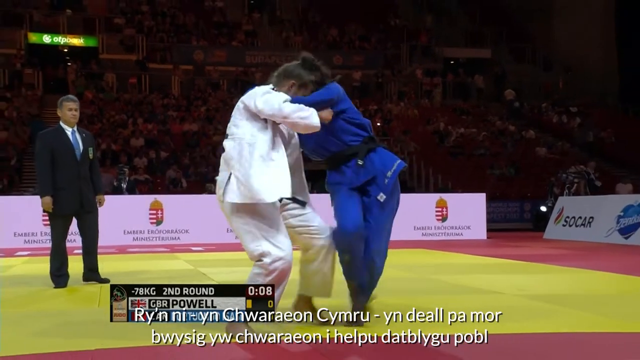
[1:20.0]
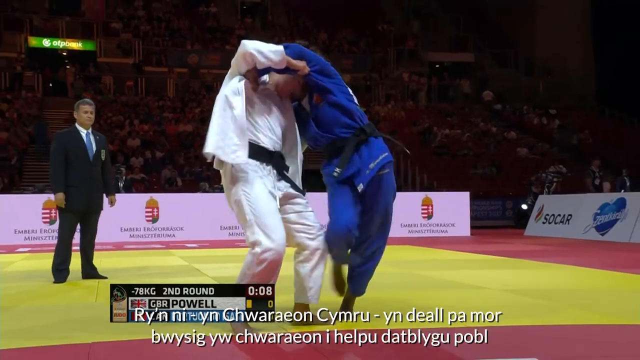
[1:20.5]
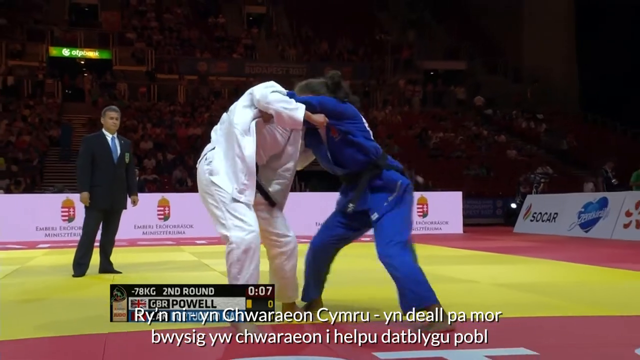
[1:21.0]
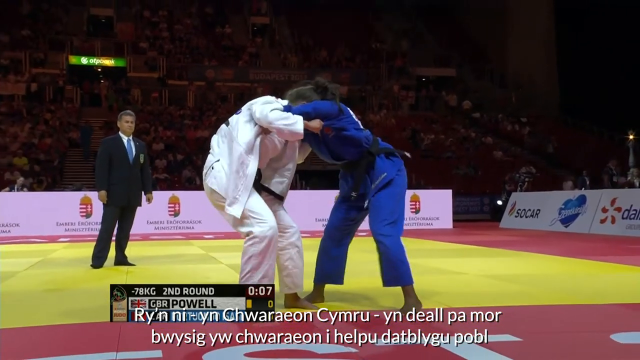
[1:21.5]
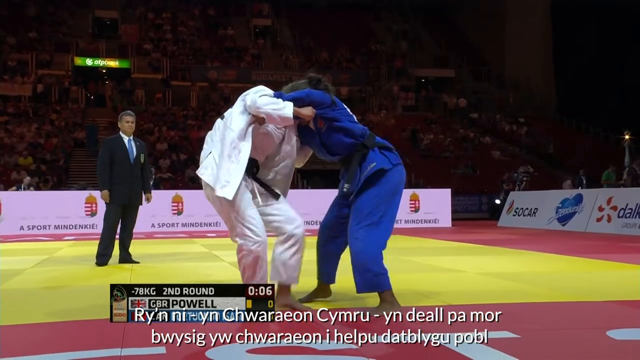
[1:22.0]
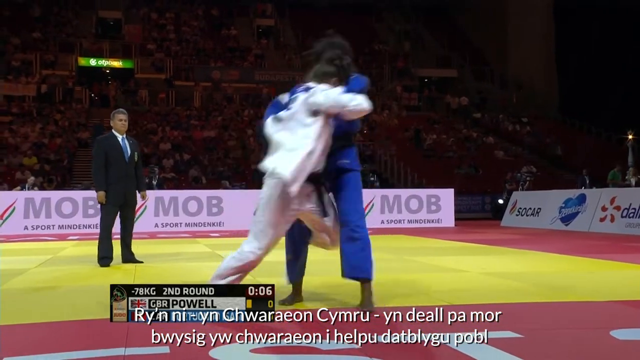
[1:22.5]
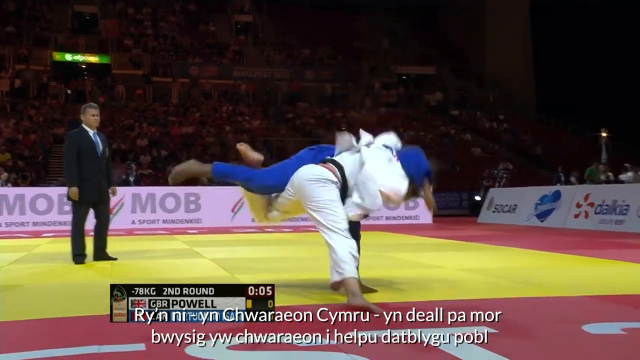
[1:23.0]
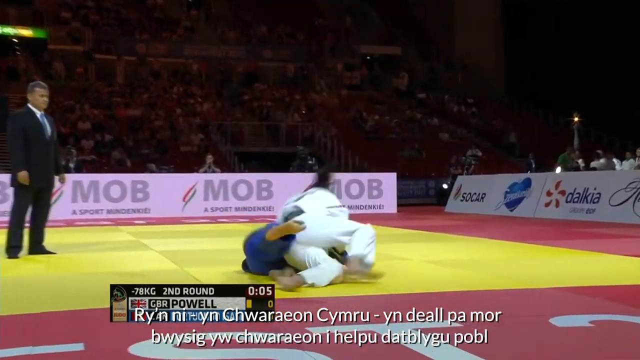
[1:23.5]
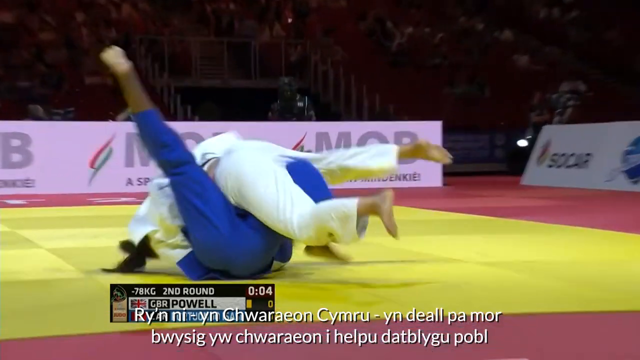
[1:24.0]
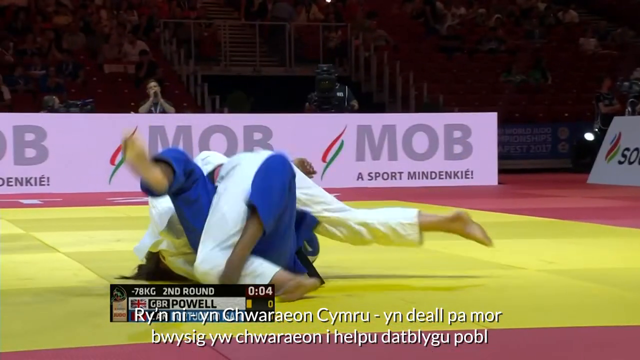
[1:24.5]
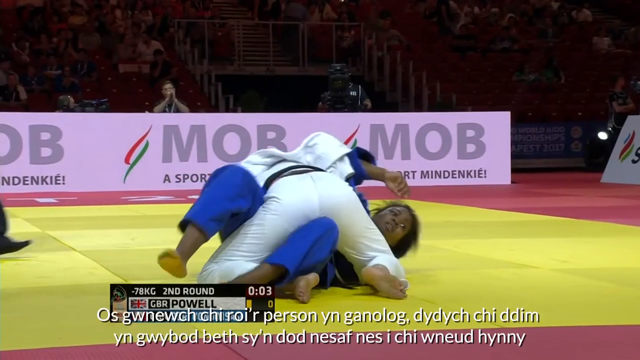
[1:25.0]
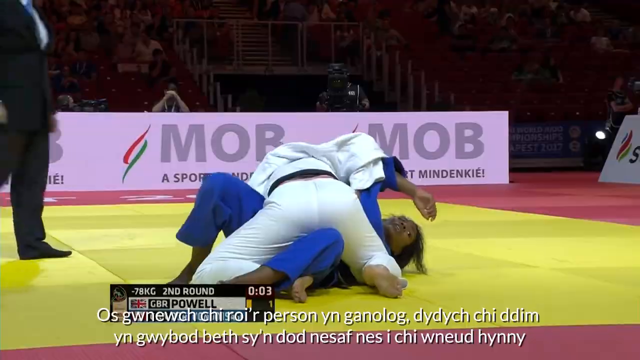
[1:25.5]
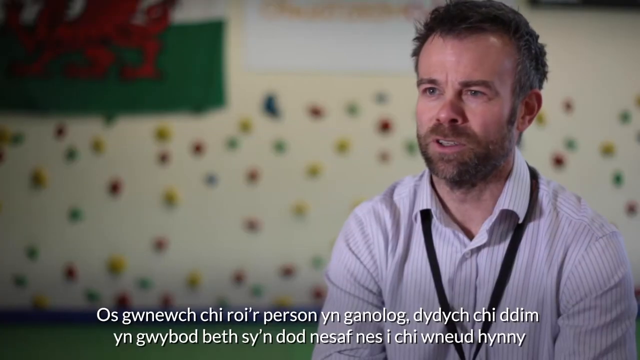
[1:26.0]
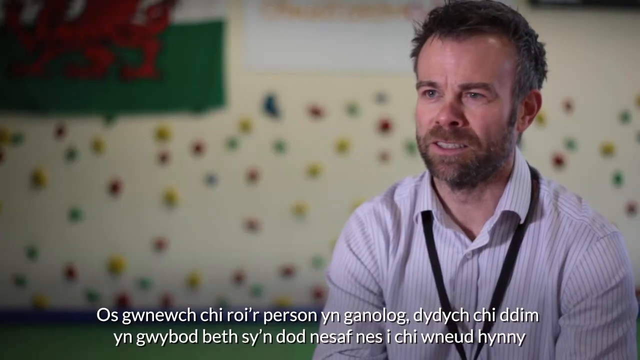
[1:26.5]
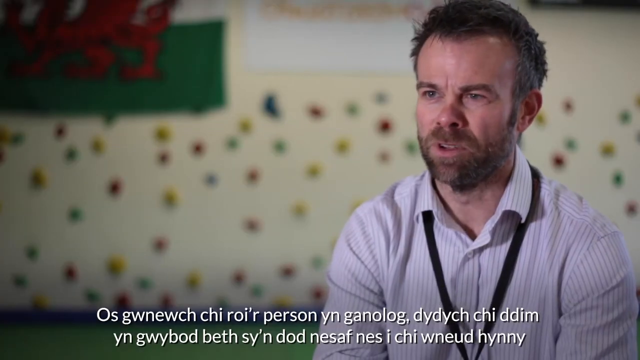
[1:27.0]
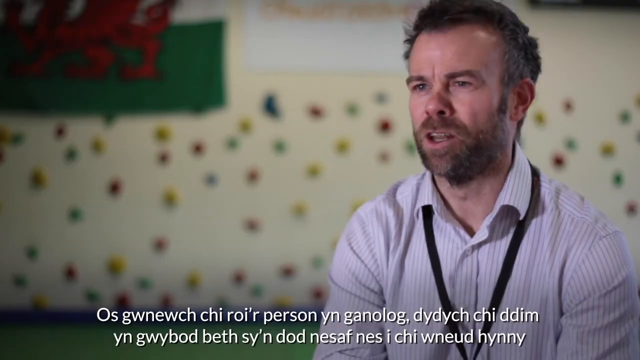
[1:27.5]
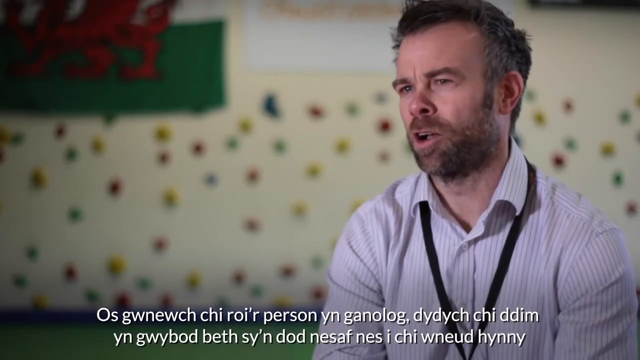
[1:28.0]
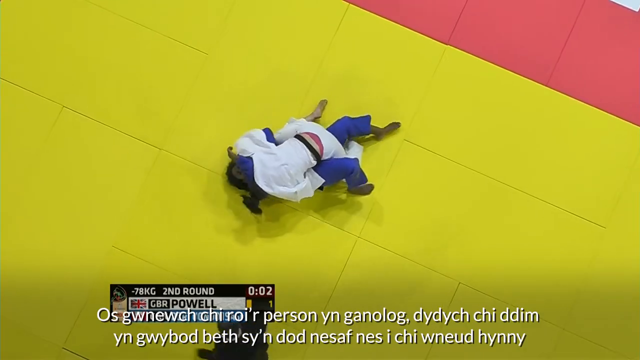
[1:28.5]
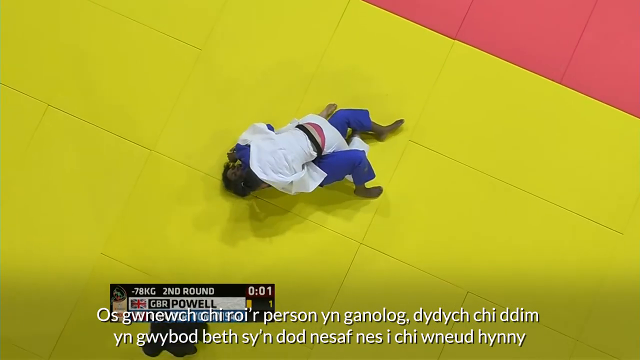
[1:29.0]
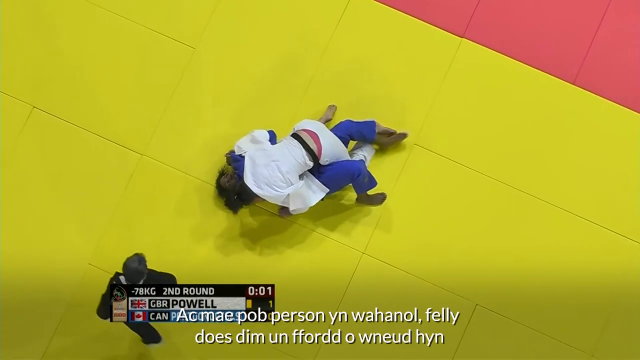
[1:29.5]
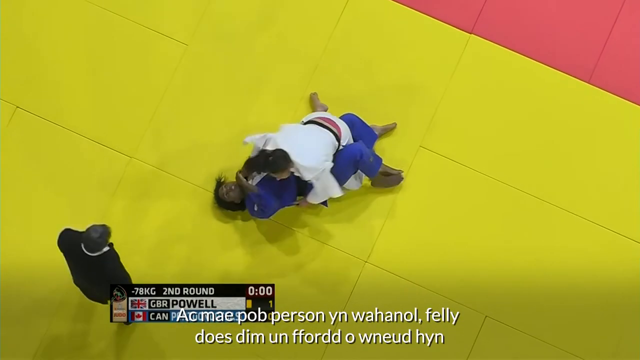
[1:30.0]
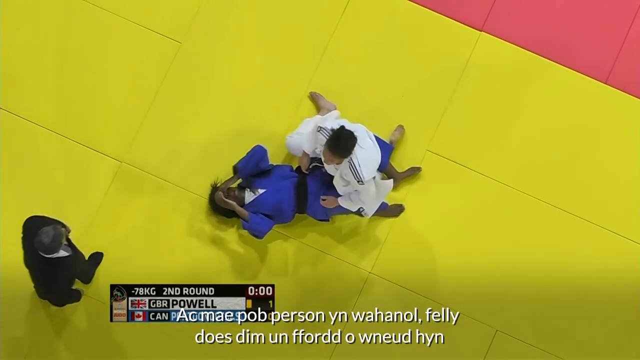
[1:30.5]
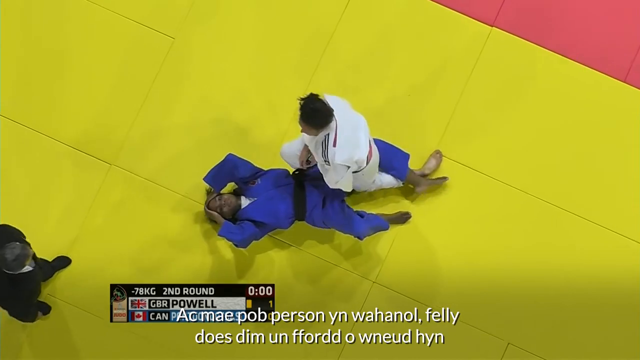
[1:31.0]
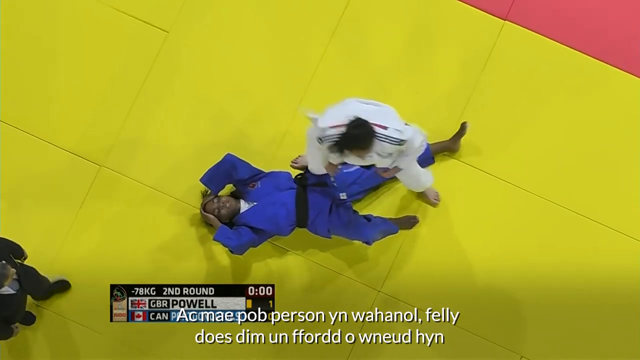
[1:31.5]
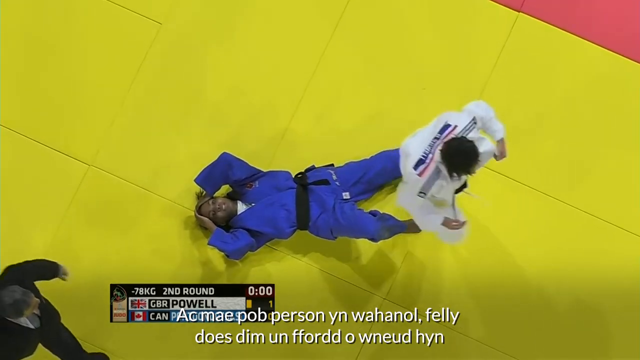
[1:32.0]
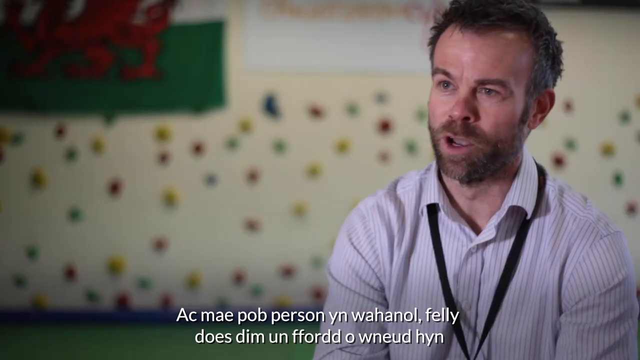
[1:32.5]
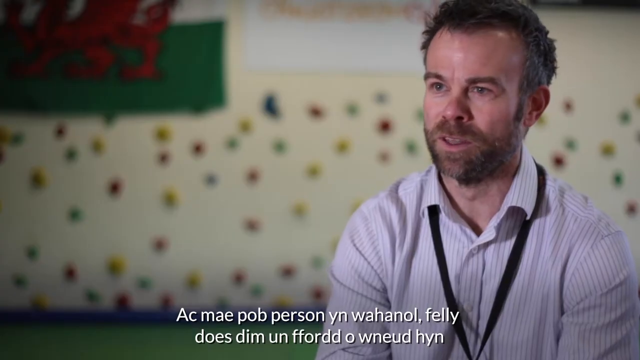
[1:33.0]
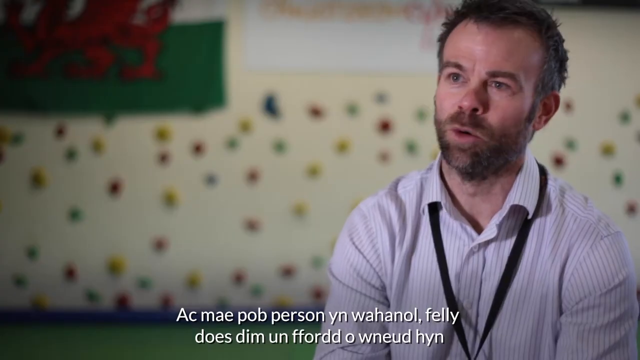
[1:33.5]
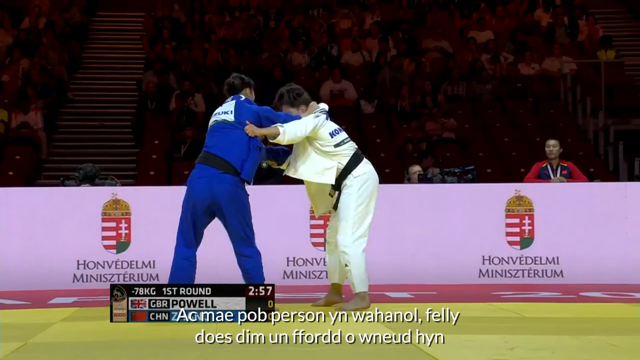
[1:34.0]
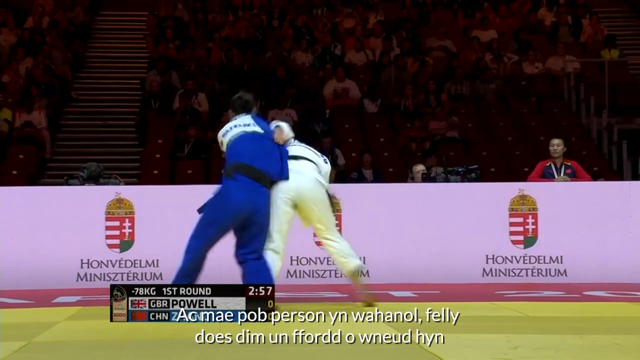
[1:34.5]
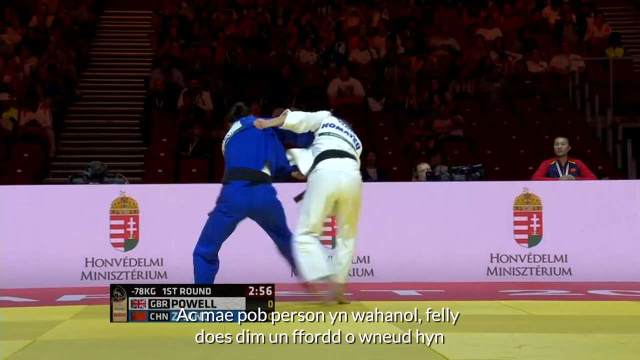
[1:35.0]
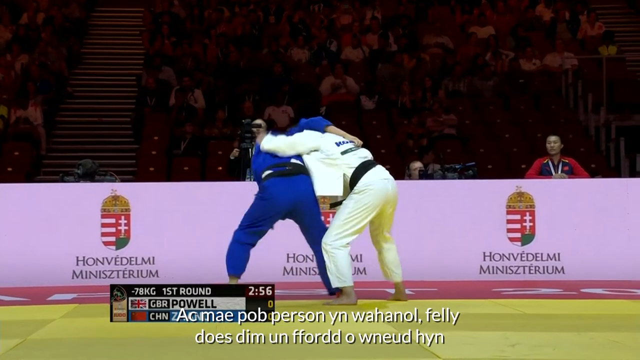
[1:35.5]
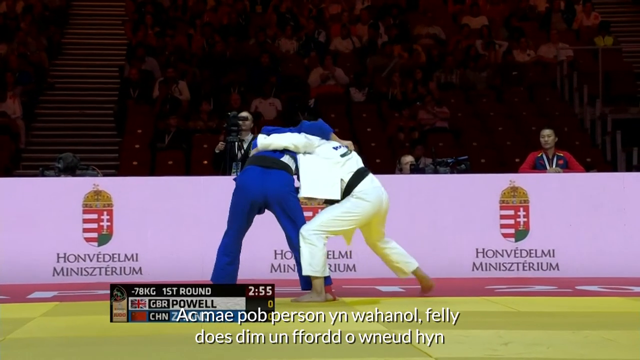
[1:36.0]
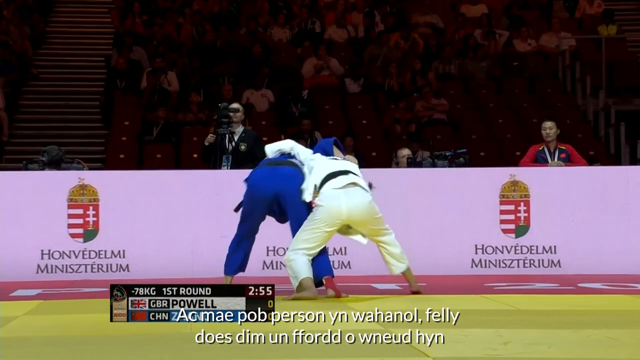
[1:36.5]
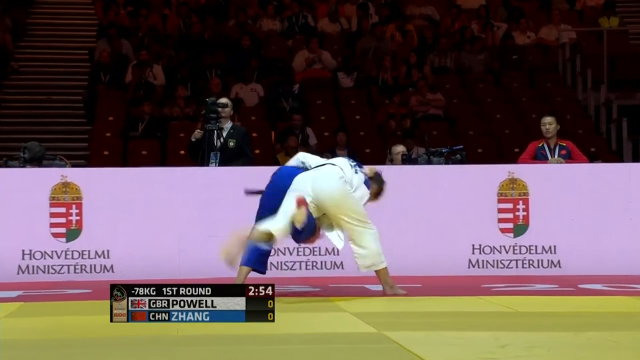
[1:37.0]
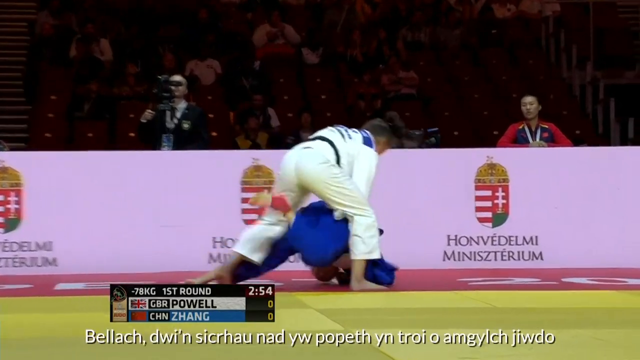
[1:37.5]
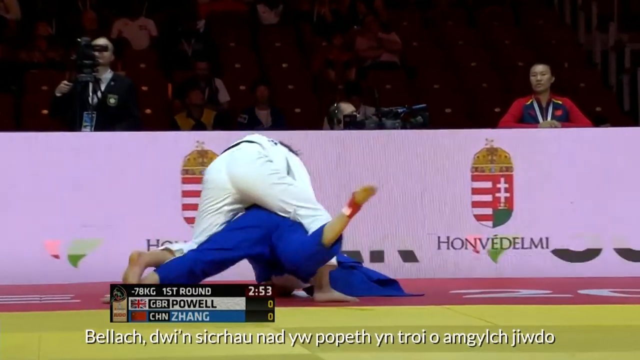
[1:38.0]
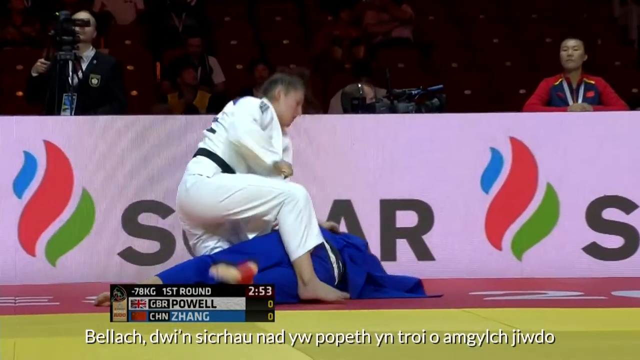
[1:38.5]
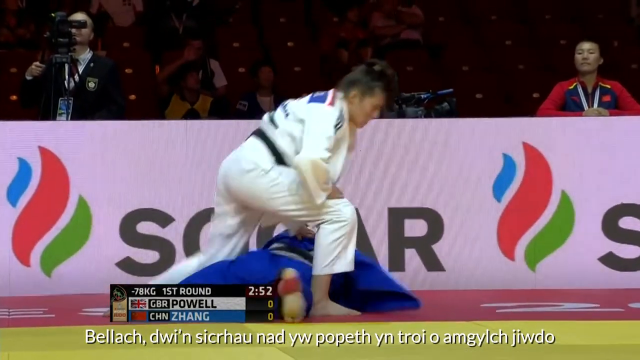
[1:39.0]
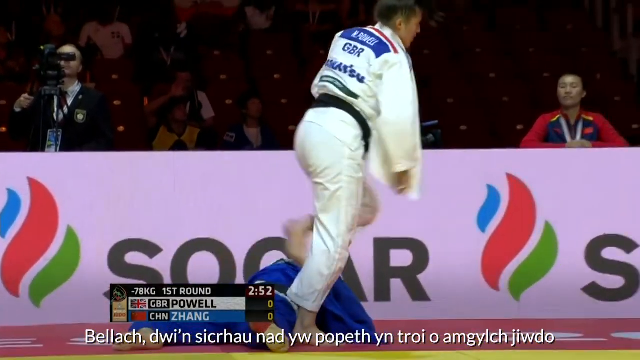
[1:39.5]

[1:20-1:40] Two judo players compete against each other: one is an African-American judo wrestler and the other is a Caucasian judo wrestler. In an open field, they grapple, each trying to take the opponent down to the ground. Different areas of the match are shown.